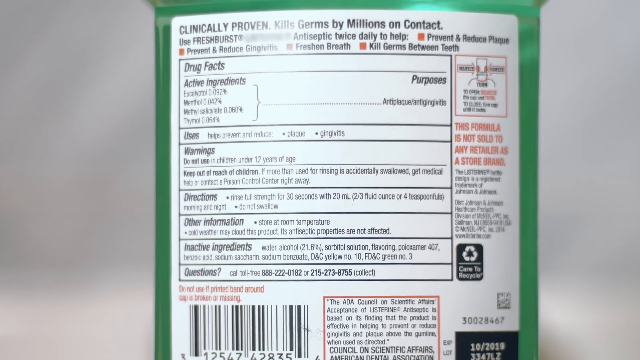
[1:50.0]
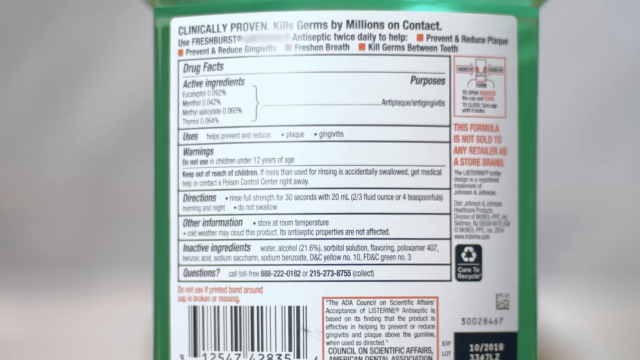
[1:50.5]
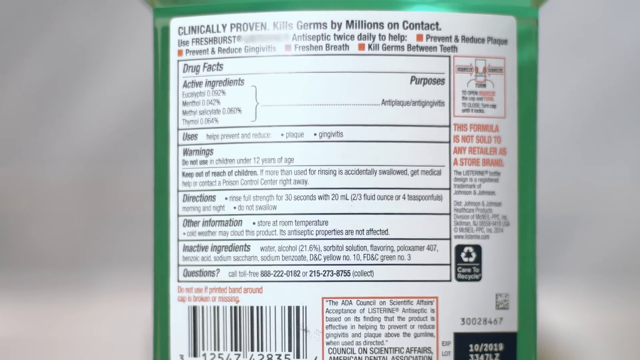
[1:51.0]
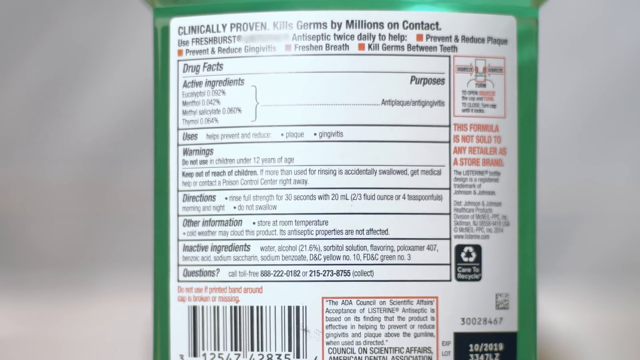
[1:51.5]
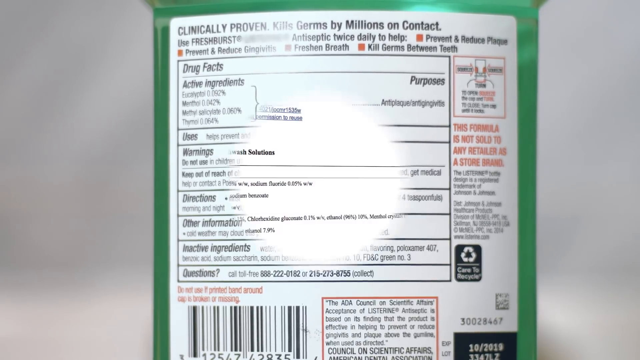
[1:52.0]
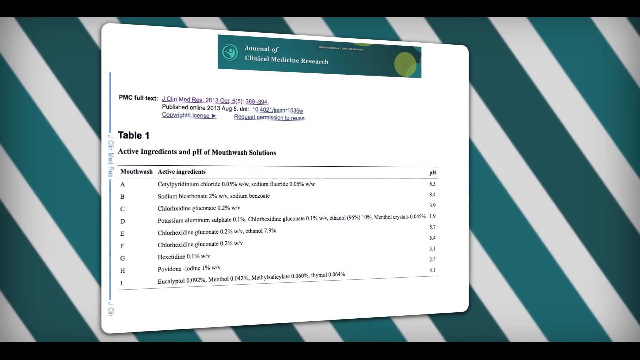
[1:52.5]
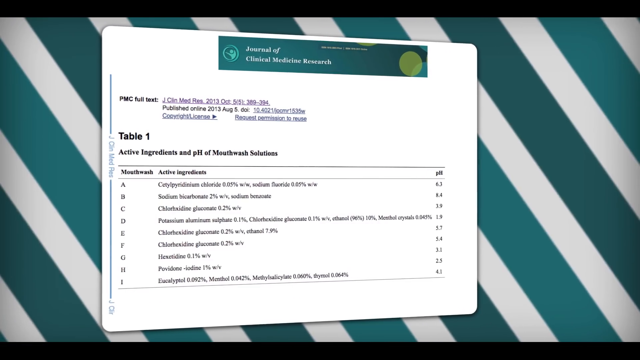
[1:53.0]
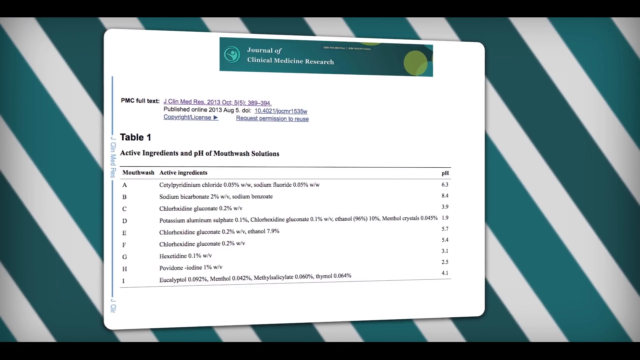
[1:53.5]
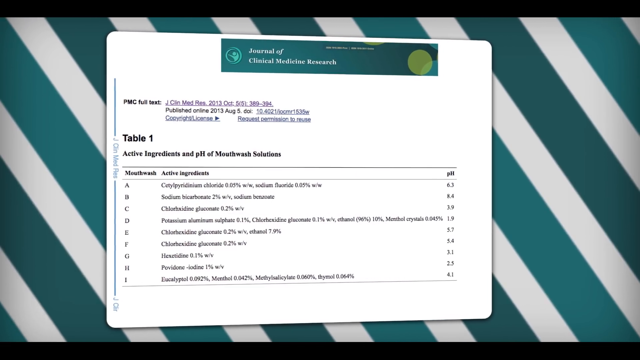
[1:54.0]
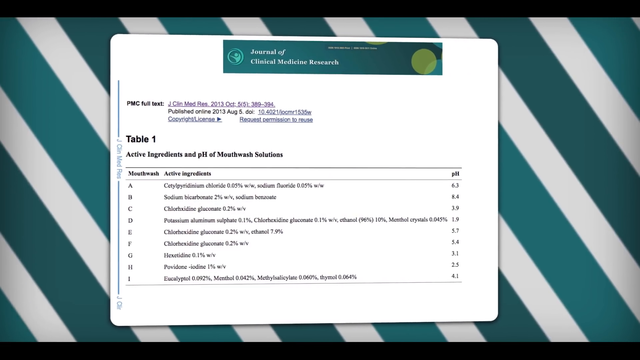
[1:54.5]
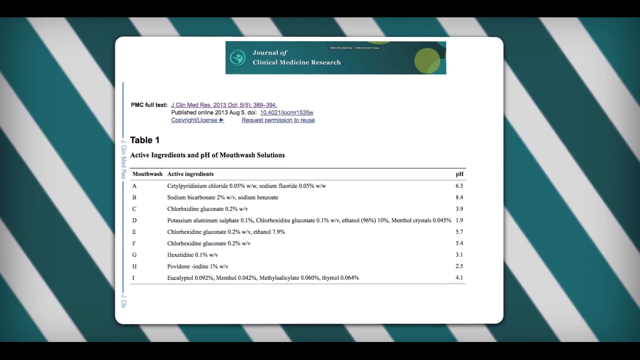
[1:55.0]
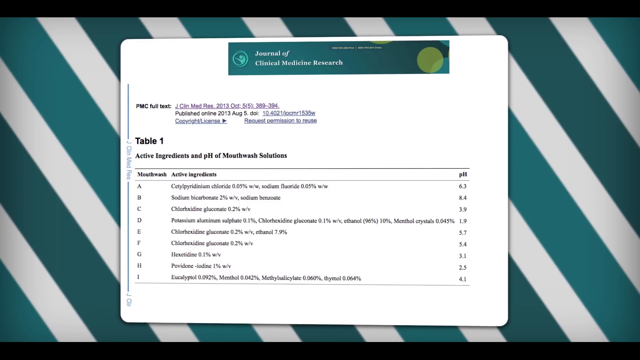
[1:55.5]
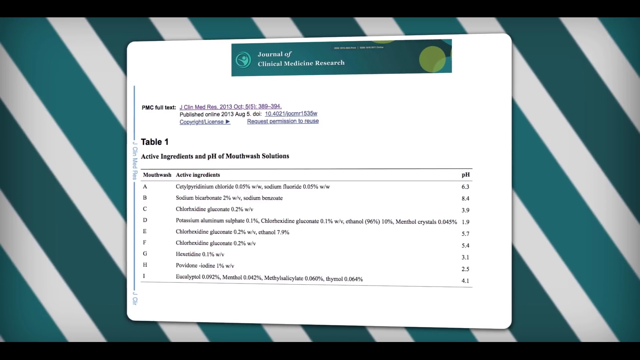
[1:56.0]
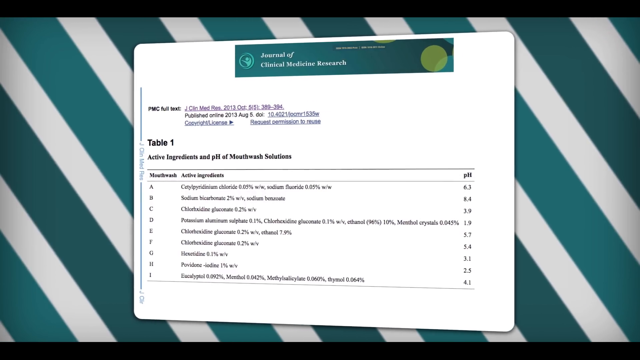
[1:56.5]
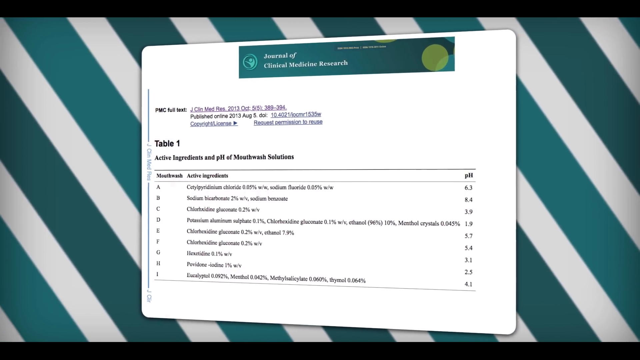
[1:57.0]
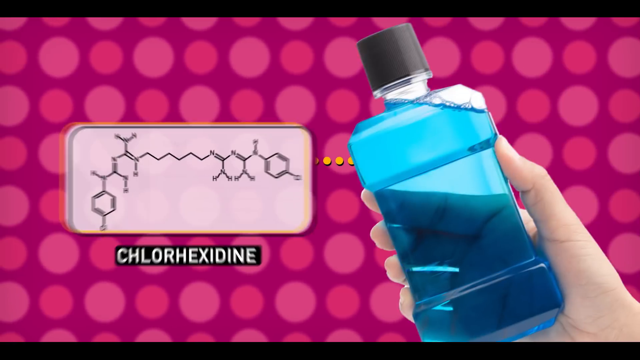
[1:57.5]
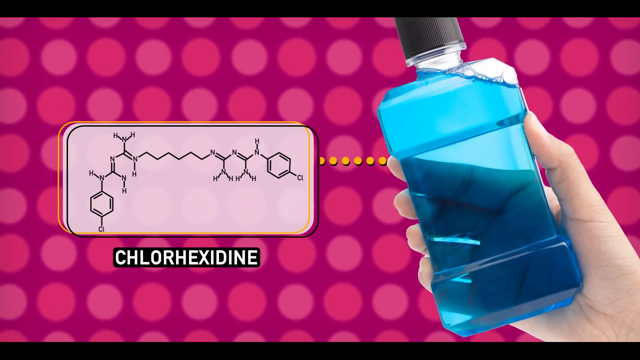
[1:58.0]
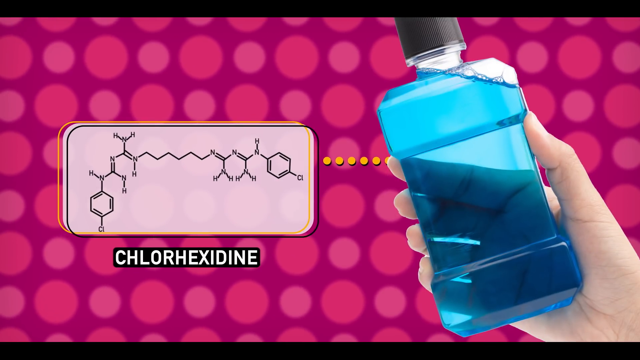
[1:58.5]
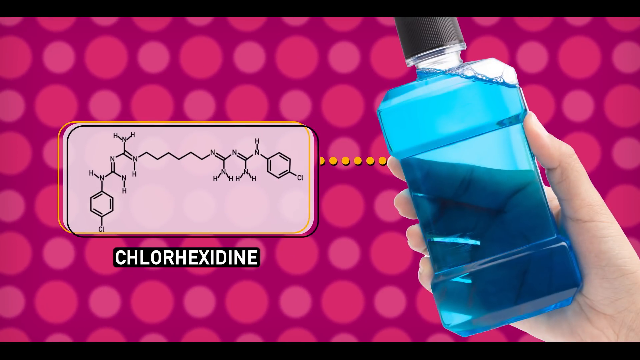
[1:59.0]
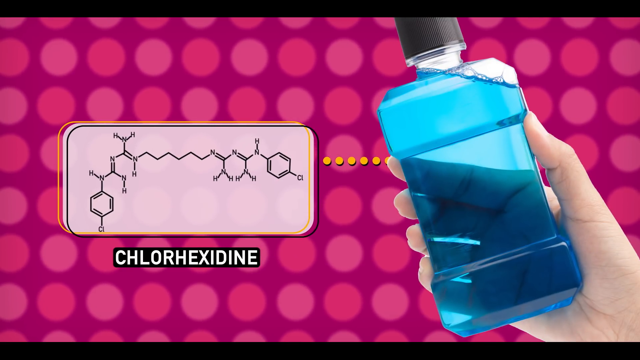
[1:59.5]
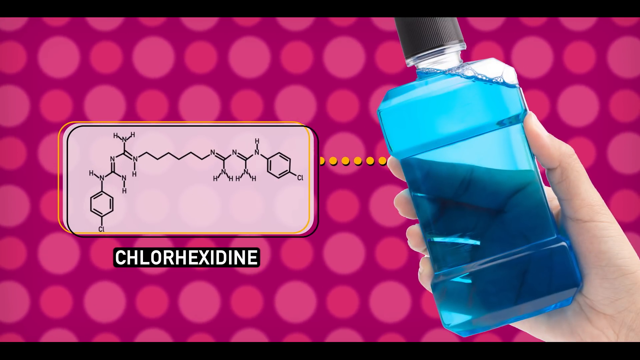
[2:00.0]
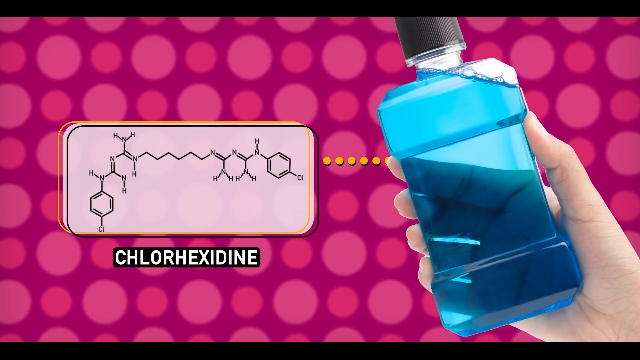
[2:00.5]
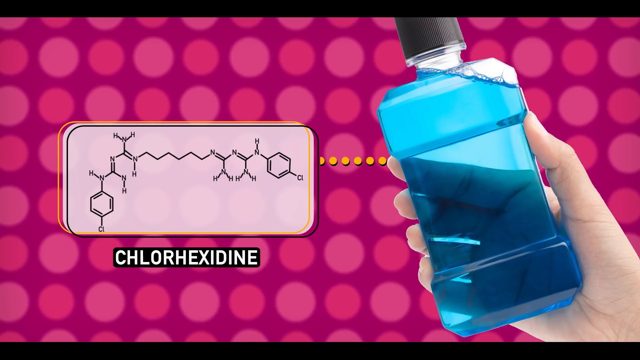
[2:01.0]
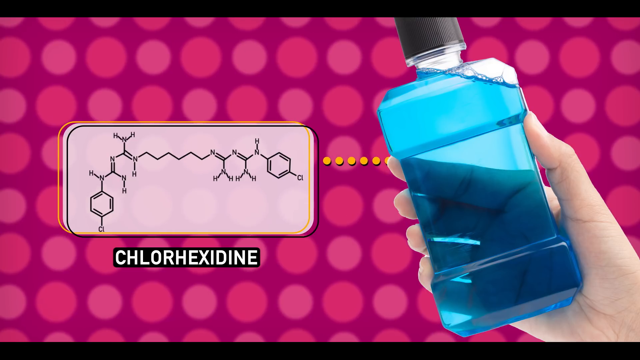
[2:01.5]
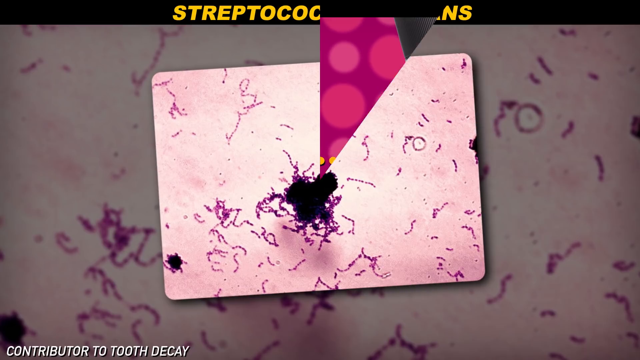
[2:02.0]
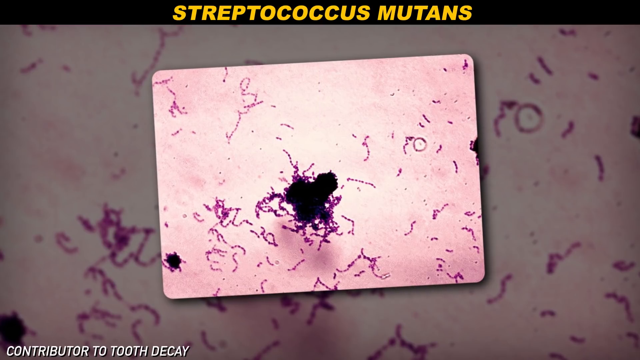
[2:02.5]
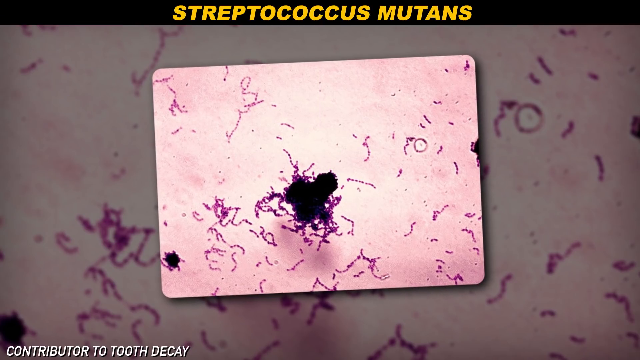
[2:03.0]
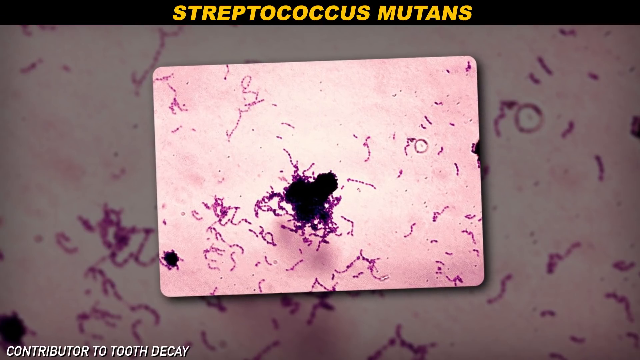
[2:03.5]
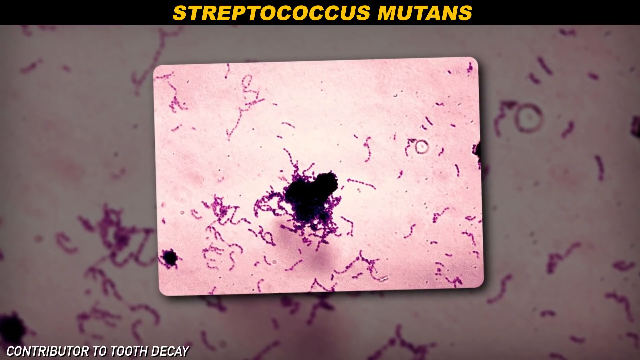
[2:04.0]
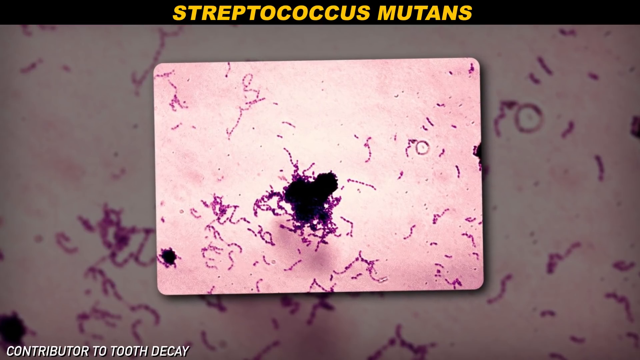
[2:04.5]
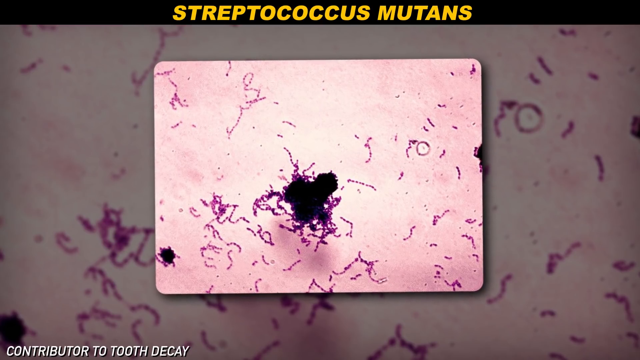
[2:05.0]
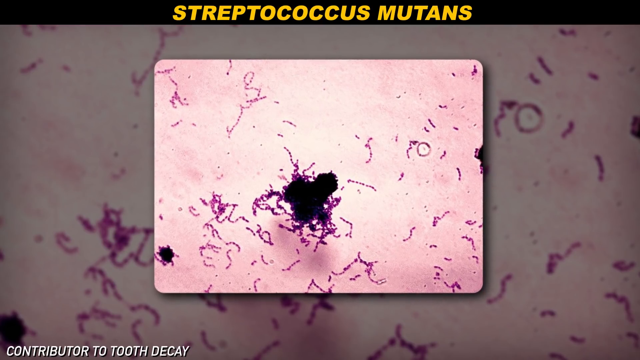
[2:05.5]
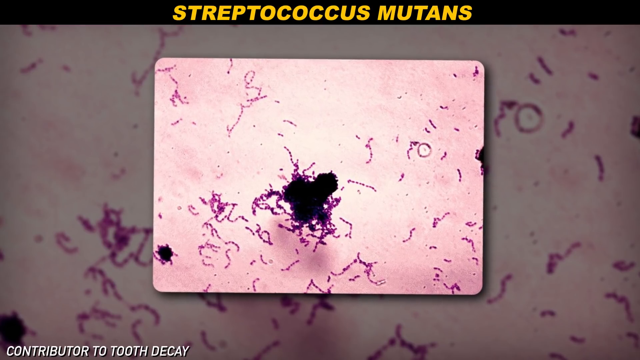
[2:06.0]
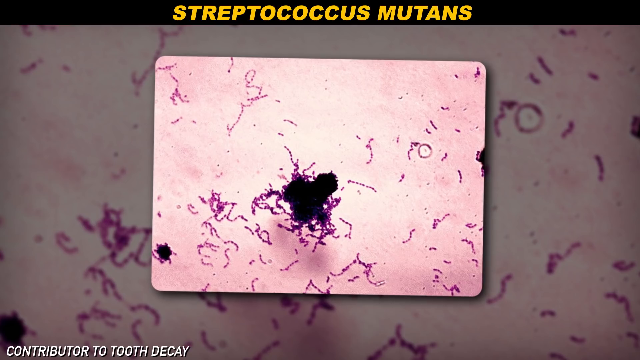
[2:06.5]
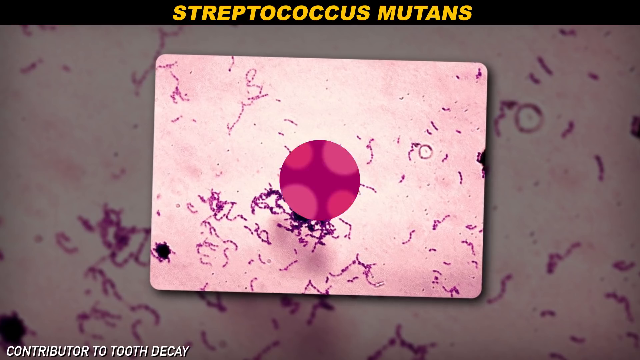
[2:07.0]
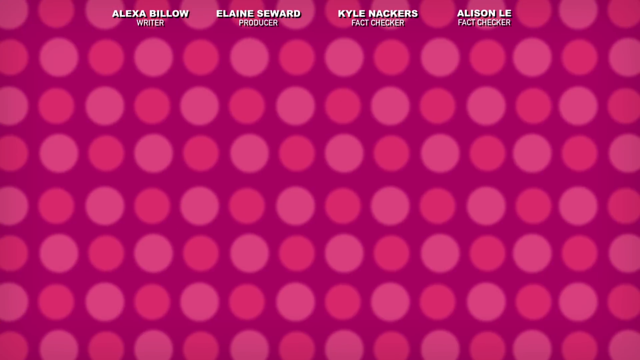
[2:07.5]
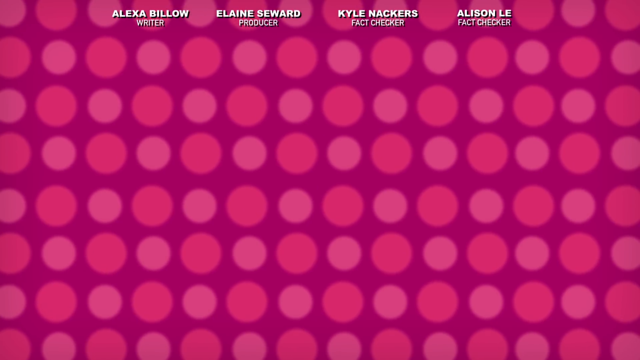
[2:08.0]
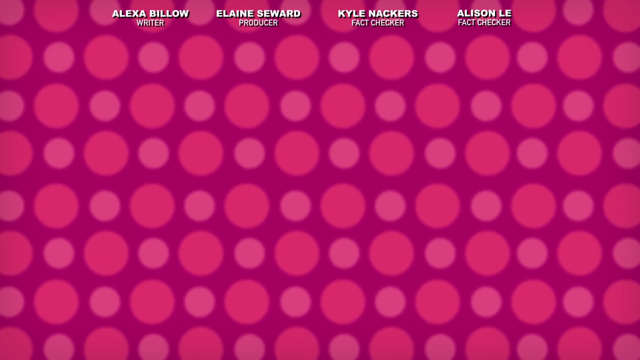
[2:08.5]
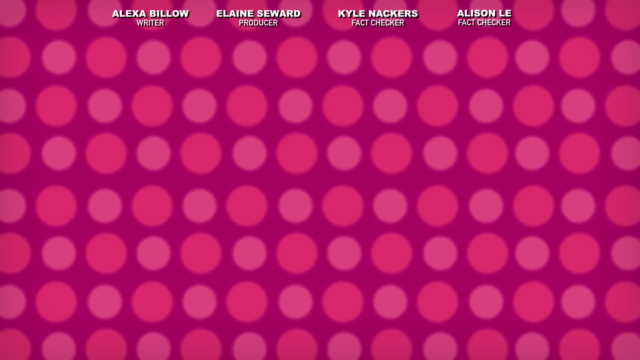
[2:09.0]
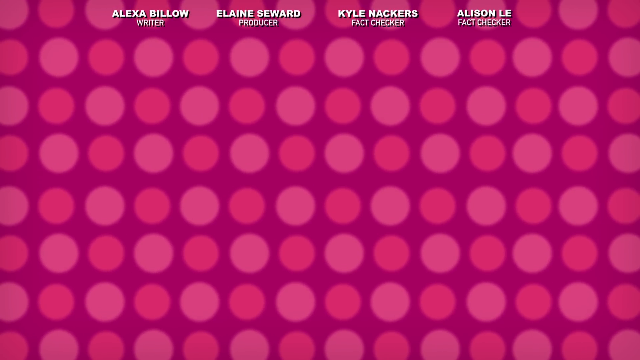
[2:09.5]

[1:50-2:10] The camera hovers on the label for a moment, showing the drug facts, usage, warnings, directions, other information, and a phone number next to "questions". Another information sheet is then shown on the blue and white diagonally striped background; it is hard to see, but it begins "table one active ingredients" and refers to the pH of mouthwash solutions. The sheet kind of rotates, and then the dark pink background with different shades of pink circles appears, with a picture of a mouthwash bottle and, next to it, a chemical formation of chlorhexidine. A new screen shows "Streptococcus Mutans" at the top and a little box with a magnified view of what is probably Streptococcus mutans. The box kind of rotates a little. Then the pink background with circles is shown, and at the top it says "Alexa Billow Writer, Elaine Seward Producer, Kyle Nackers Fact Checker, and Allison Le Fact Checker".